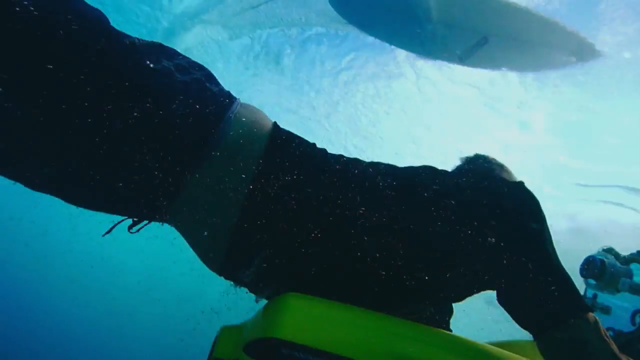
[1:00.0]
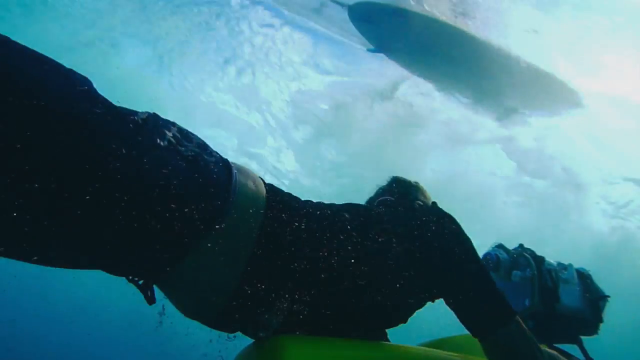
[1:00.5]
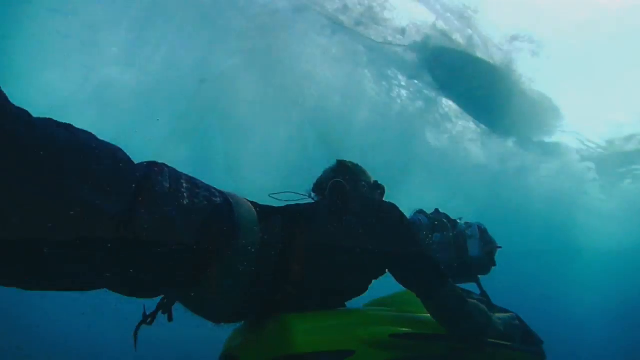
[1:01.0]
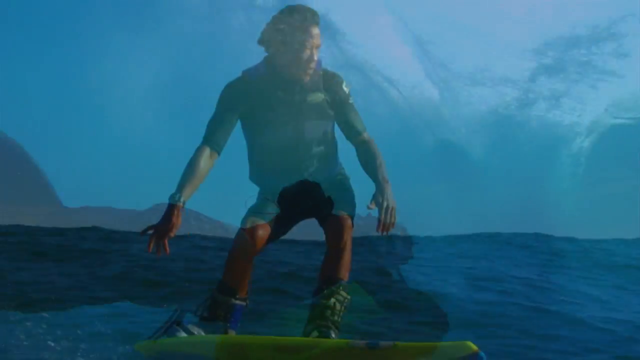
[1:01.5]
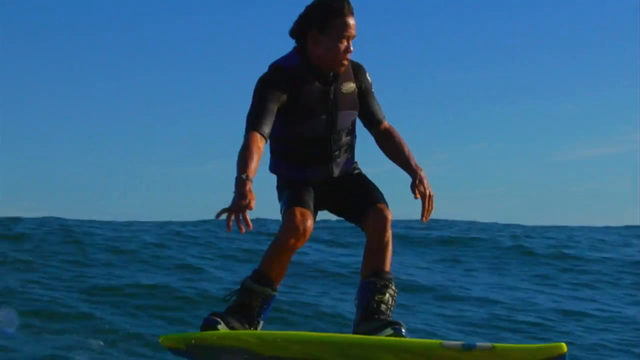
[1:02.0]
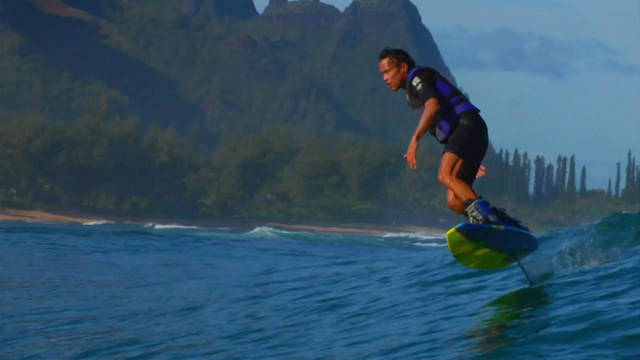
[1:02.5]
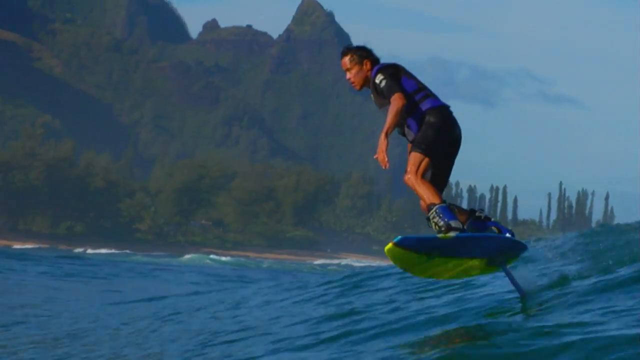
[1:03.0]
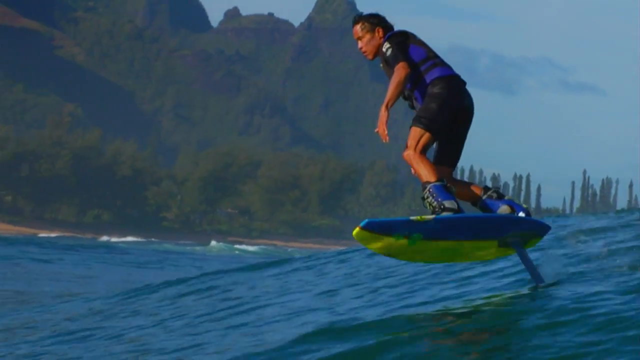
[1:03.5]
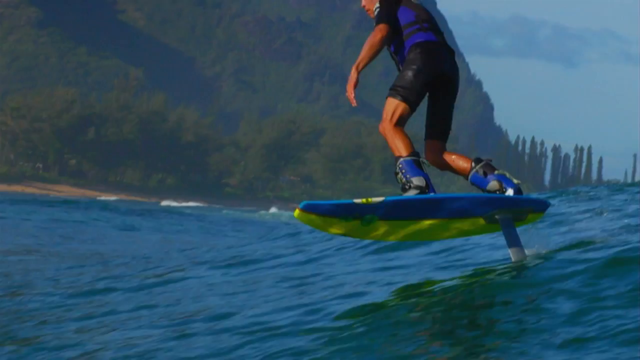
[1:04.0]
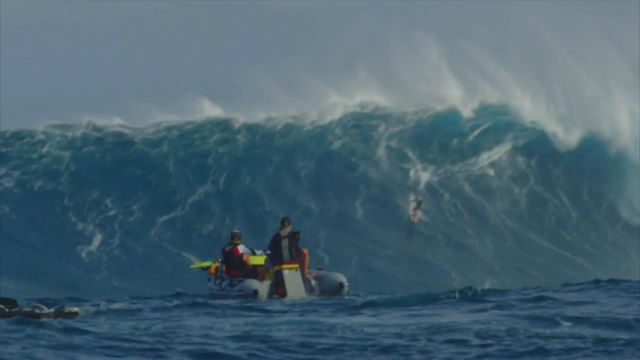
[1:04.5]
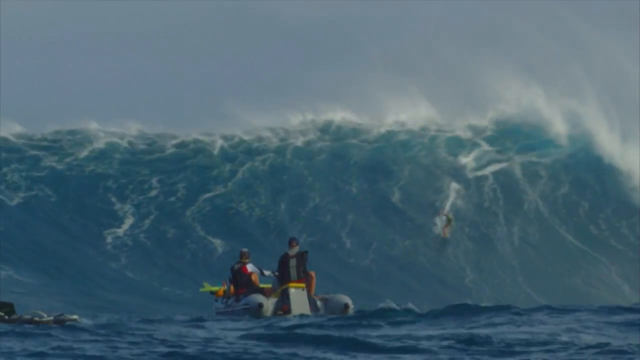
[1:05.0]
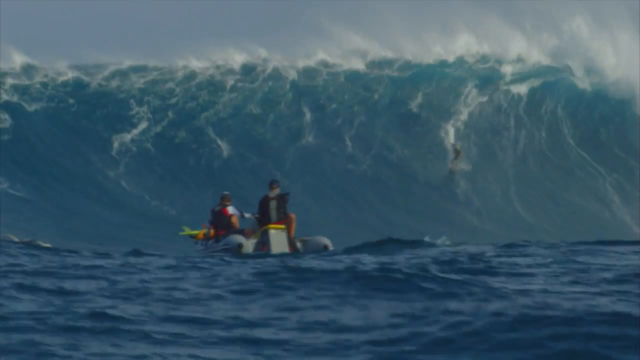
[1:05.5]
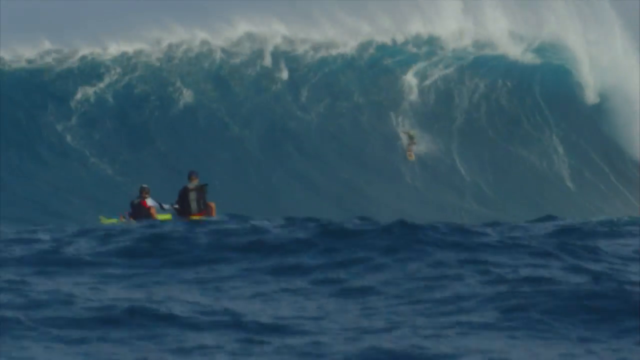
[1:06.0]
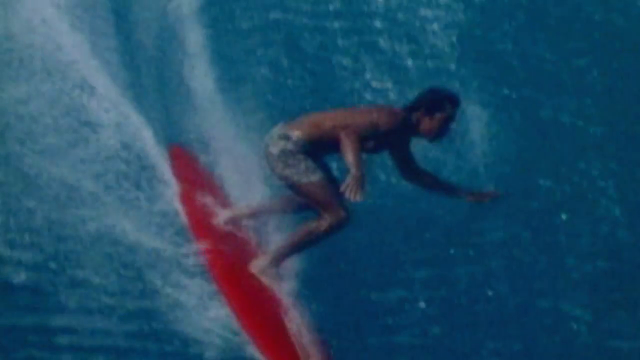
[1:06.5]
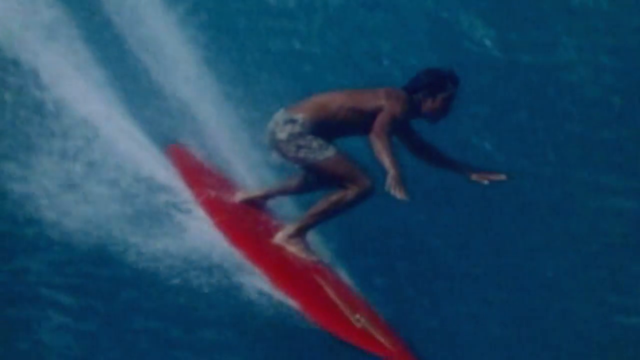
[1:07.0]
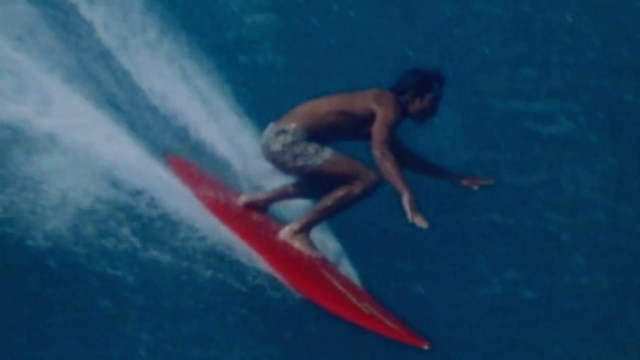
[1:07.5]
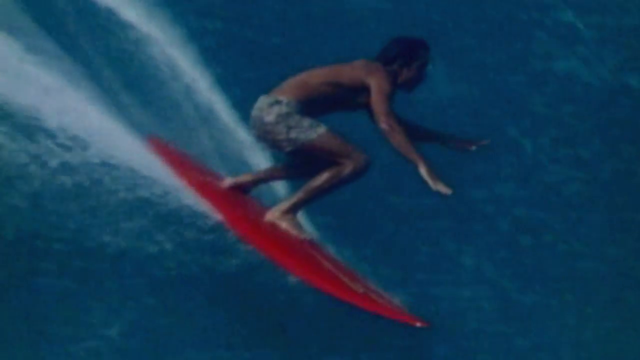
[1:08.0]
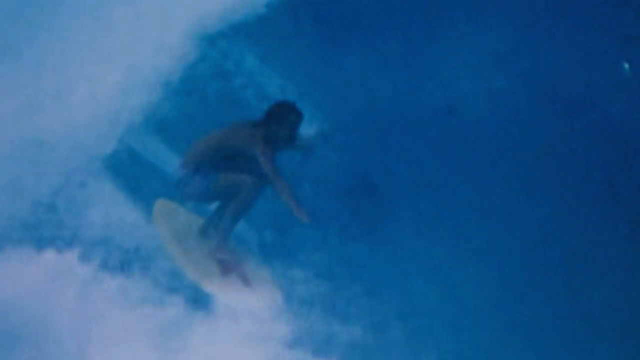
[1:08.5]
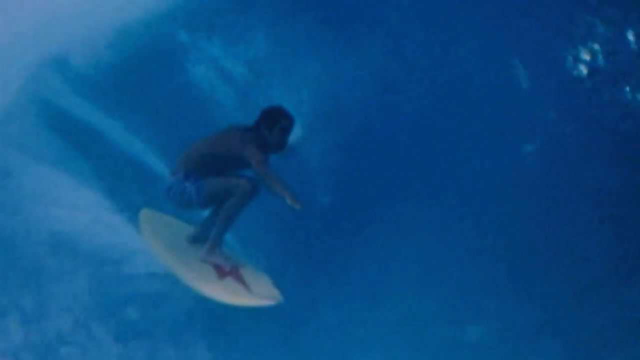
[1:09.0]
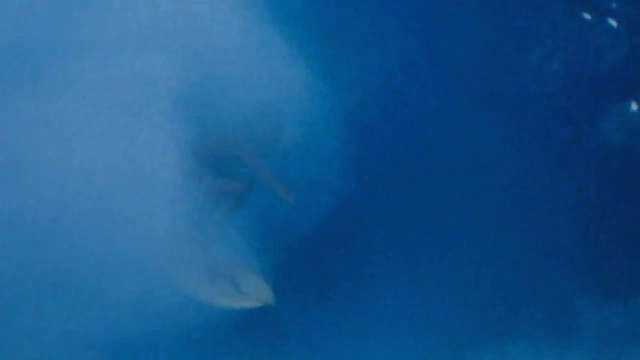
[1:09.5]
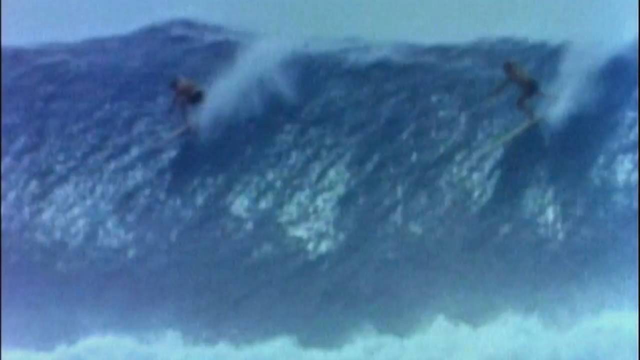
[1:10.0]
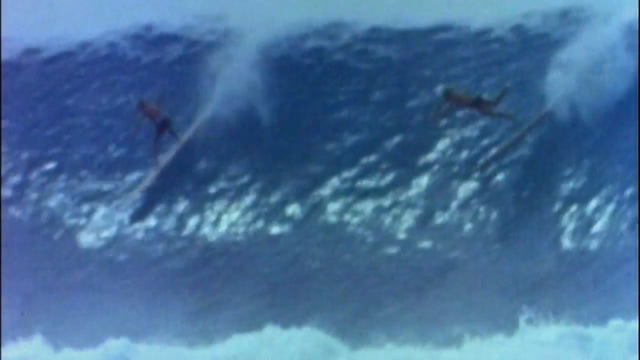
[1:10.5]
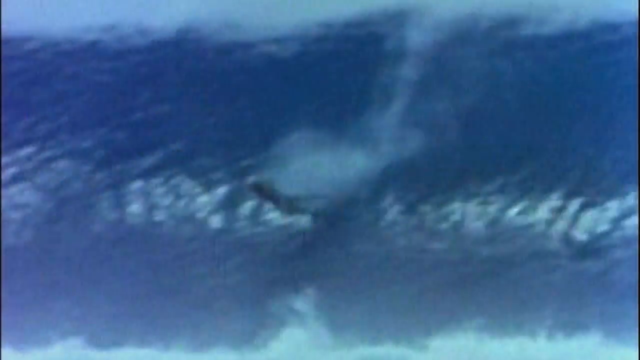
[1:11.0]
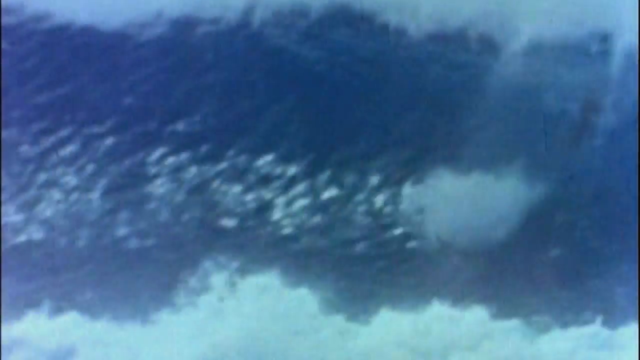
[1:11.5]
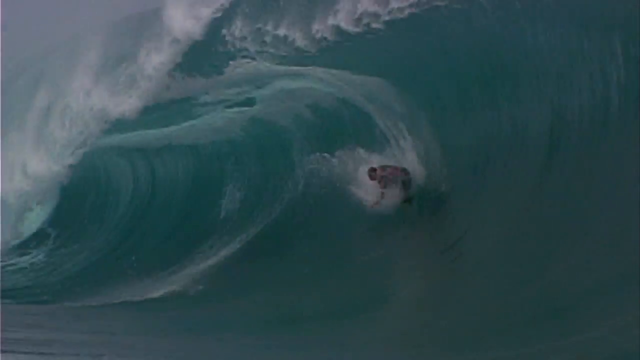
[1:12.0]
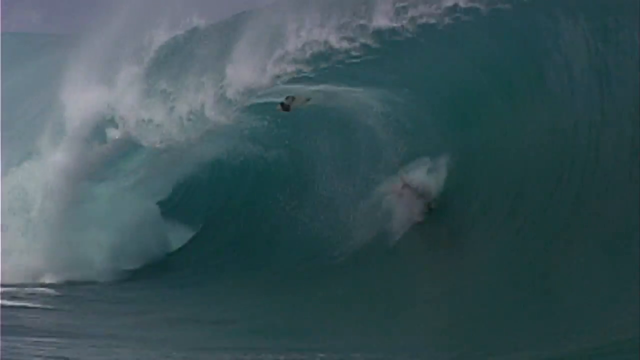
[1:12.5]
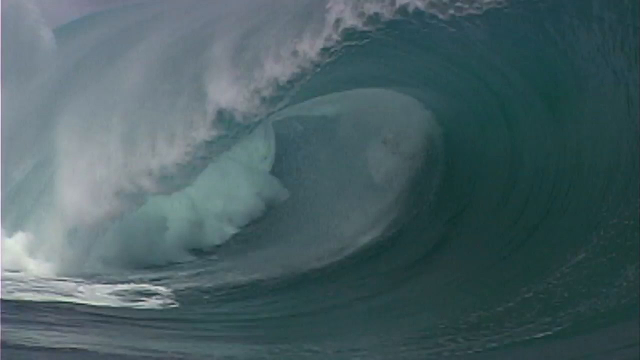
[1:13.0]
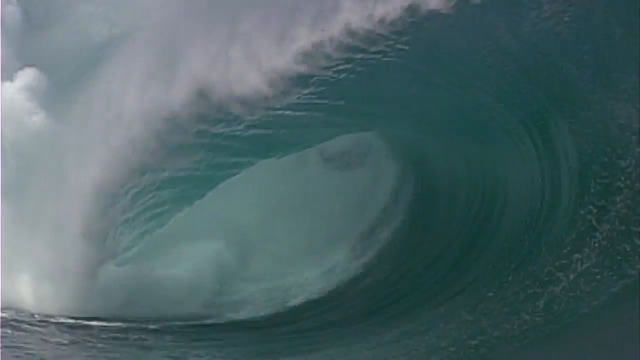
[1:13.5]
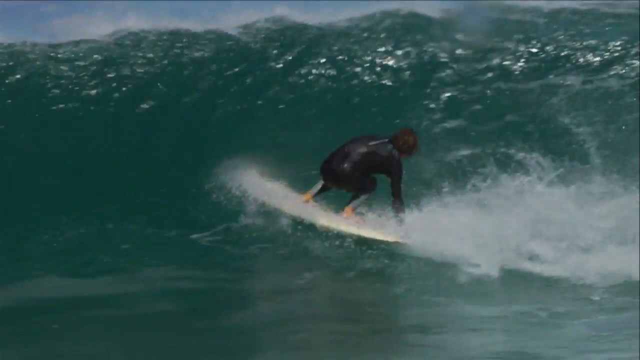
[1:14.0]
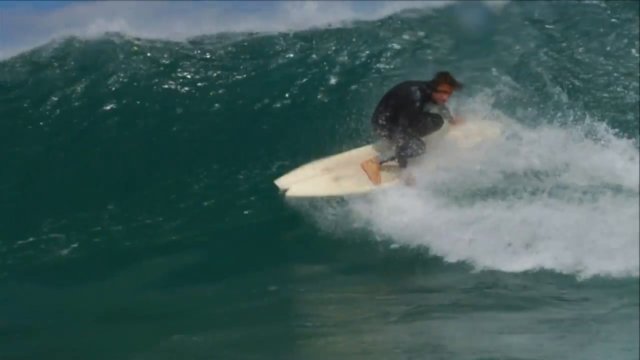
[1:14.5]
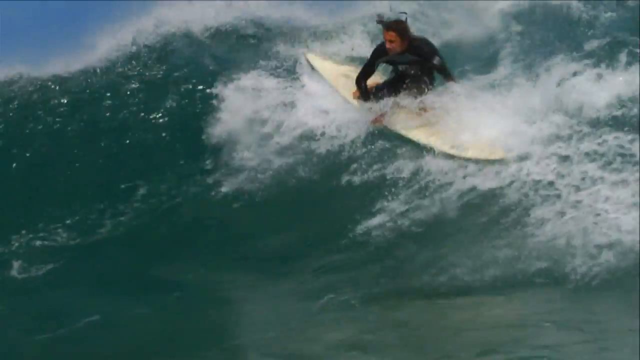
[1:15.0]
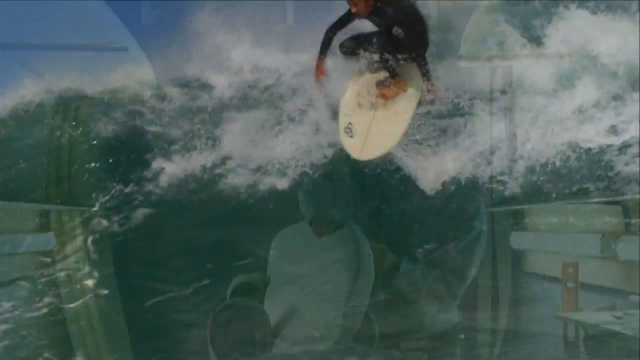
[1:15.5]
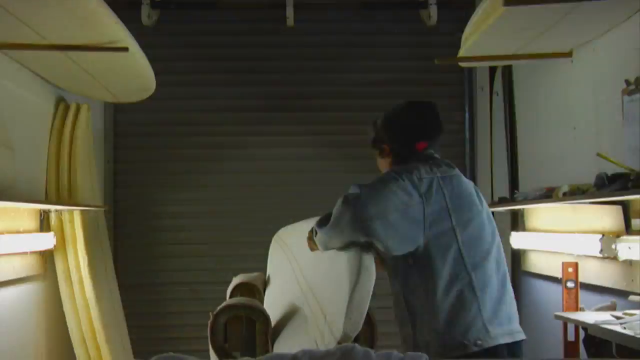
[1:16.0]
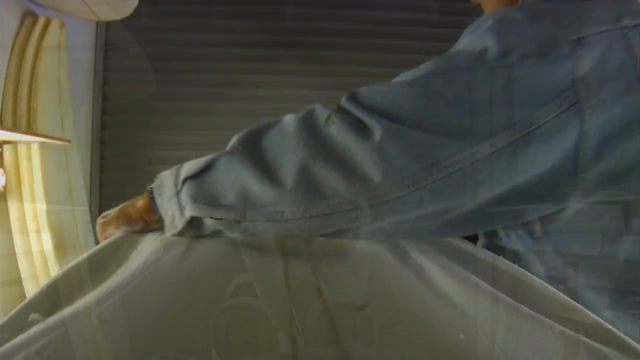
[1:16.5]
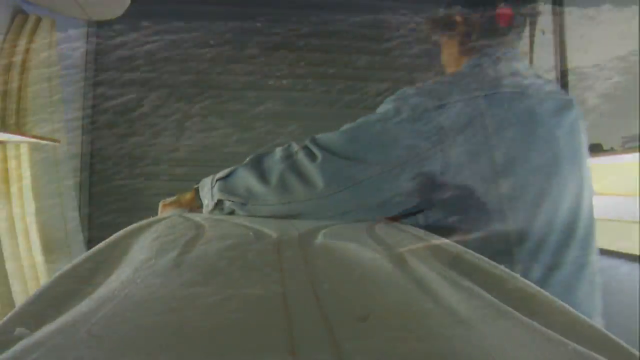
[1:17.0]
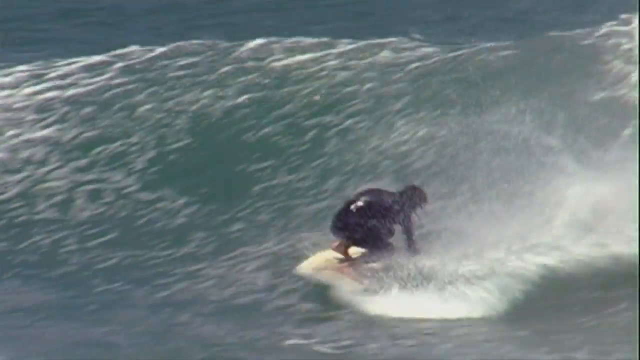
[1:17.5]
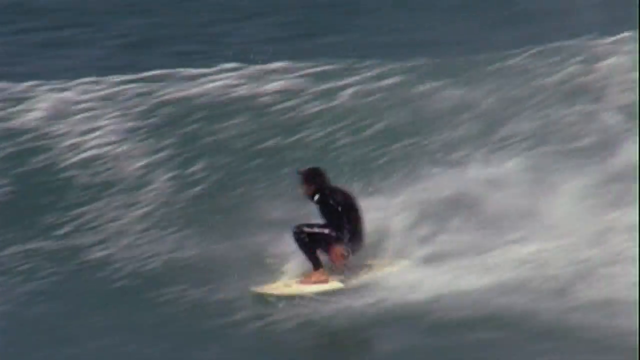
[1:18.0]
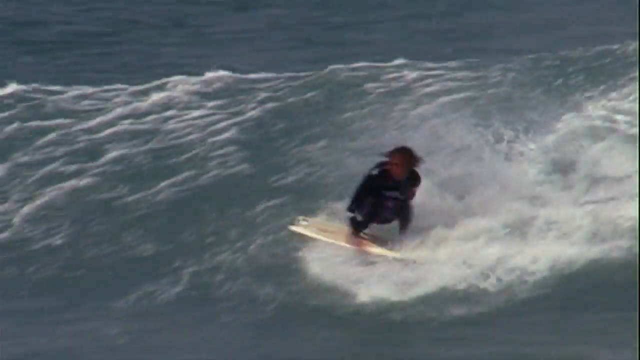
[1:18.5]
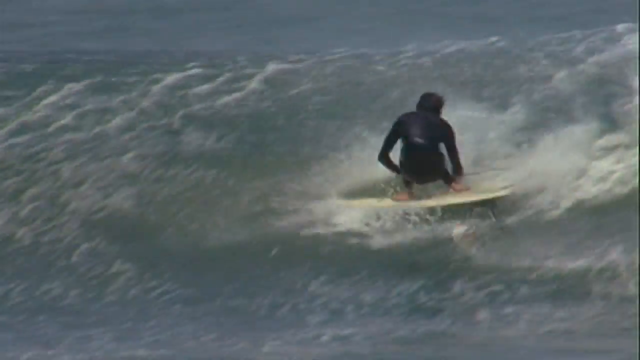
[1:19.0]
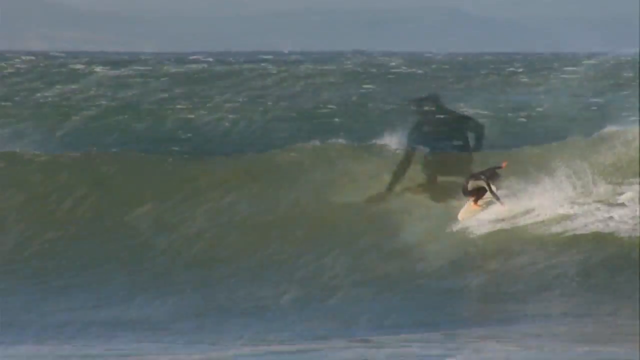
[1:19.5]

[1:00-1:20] A man surfs on a modern-looking blue and yellow surfboard that has a little motor underneath the water, so he is almost above the water. He wears blue and black boots and a tight-fitting wetsuit and rides a very tall wave, maybe 15 meters high, while two men in a dinghy or small boat record or watch him. People fall off a wave, another person falls, and a person does a 360-degree turn on a wave. A short process of how surfboards are made is apparently shown. A man in a black wetsuit does what appears to be a 540 or 720 spin, maybe even a 1080.